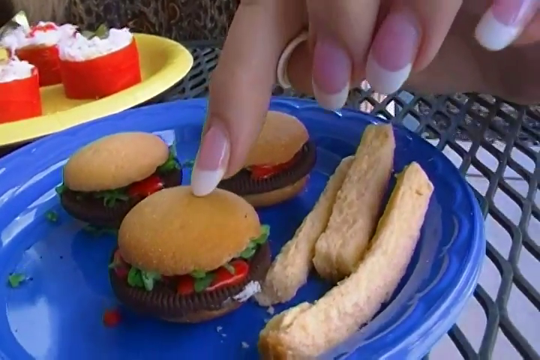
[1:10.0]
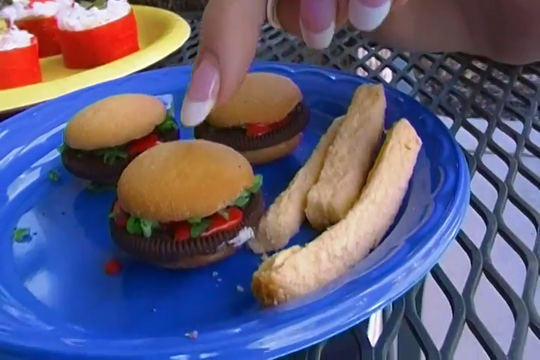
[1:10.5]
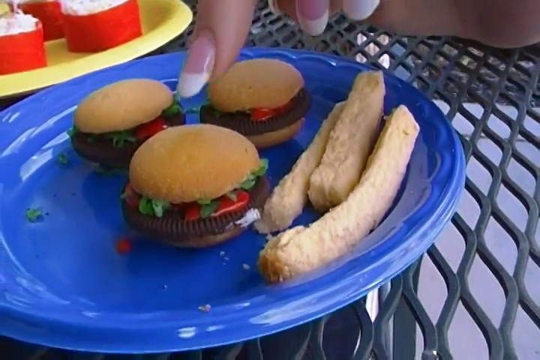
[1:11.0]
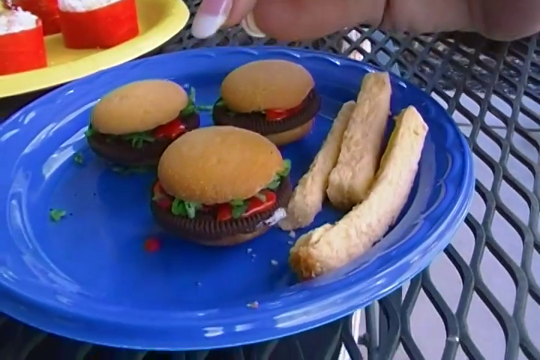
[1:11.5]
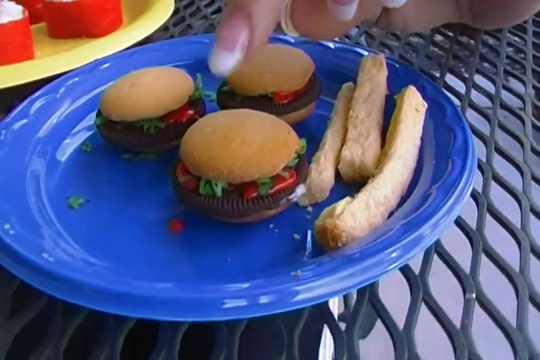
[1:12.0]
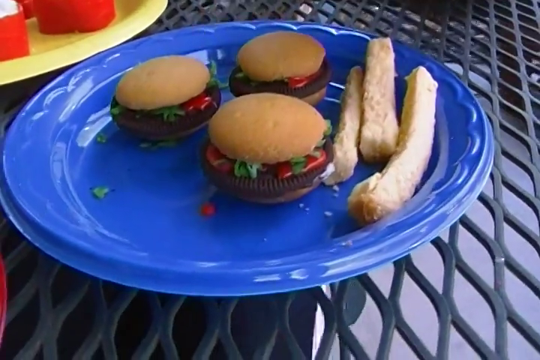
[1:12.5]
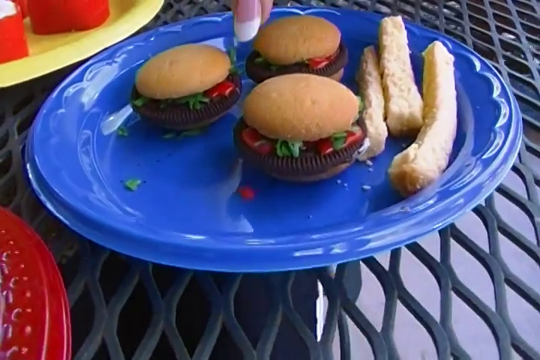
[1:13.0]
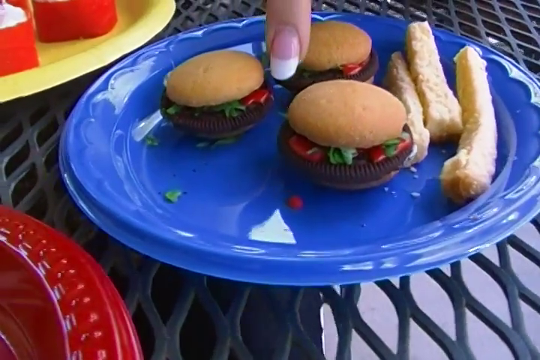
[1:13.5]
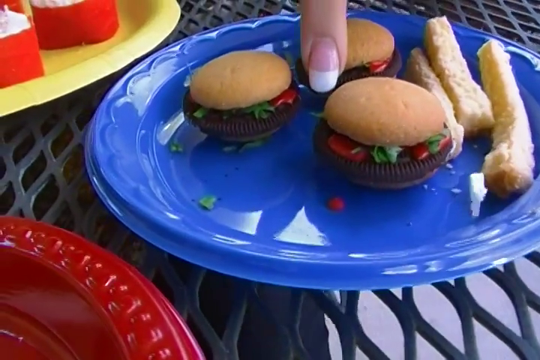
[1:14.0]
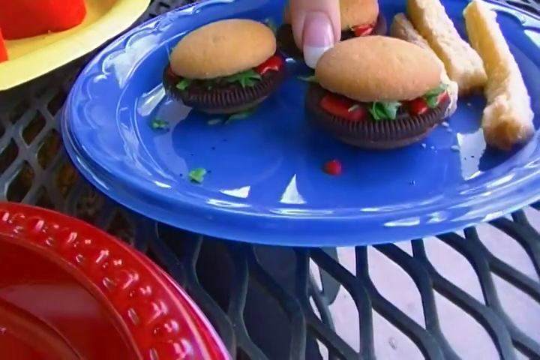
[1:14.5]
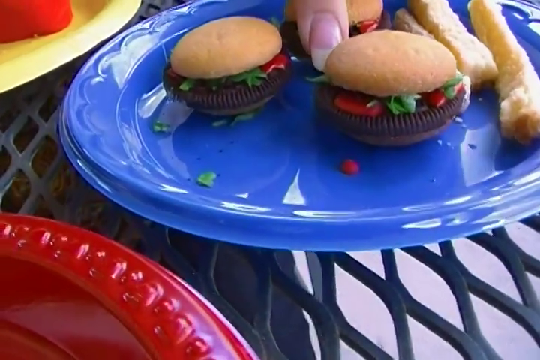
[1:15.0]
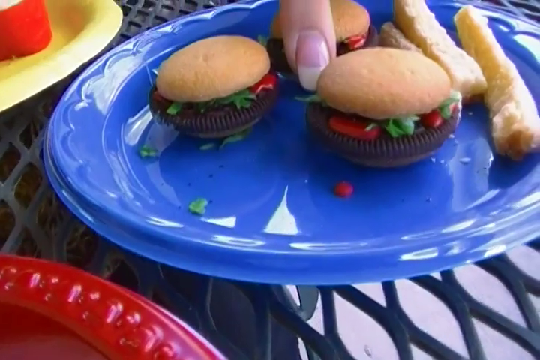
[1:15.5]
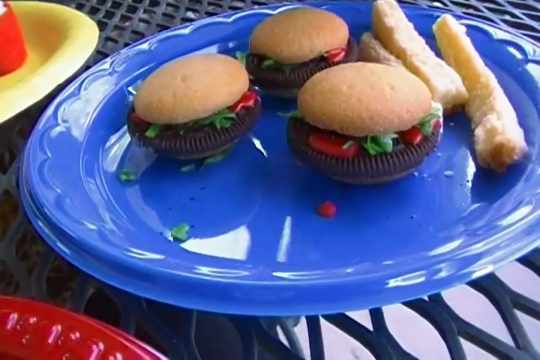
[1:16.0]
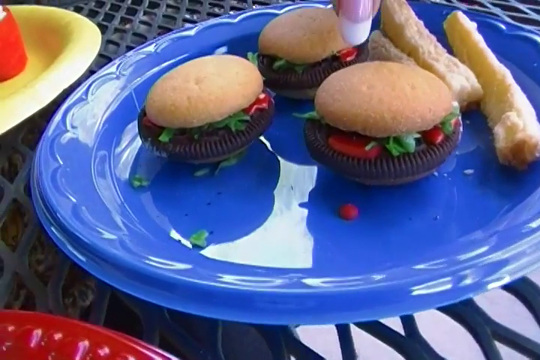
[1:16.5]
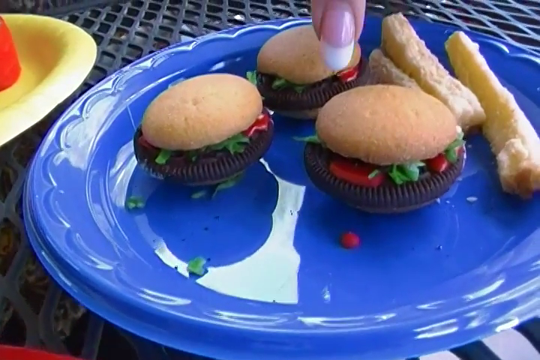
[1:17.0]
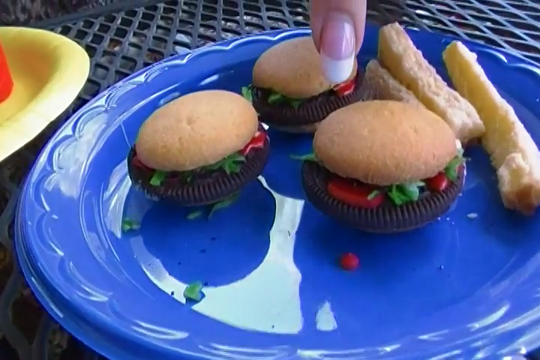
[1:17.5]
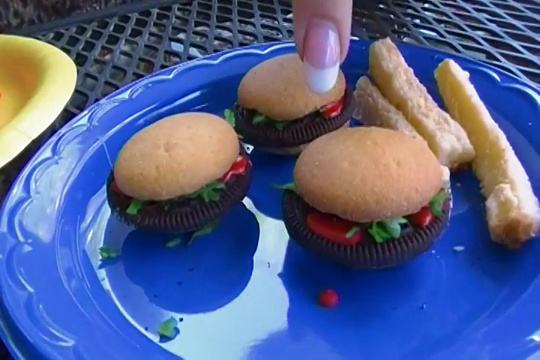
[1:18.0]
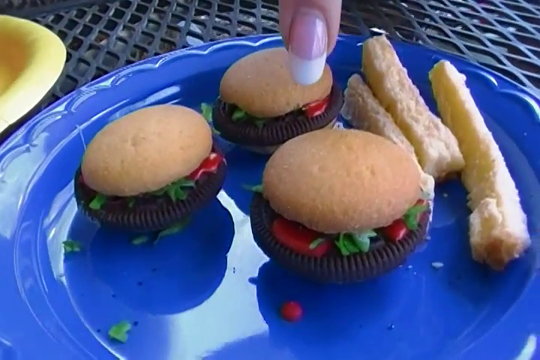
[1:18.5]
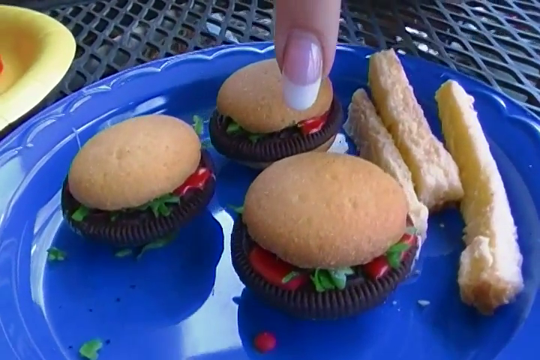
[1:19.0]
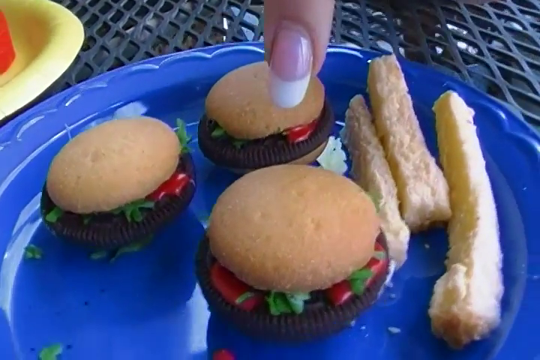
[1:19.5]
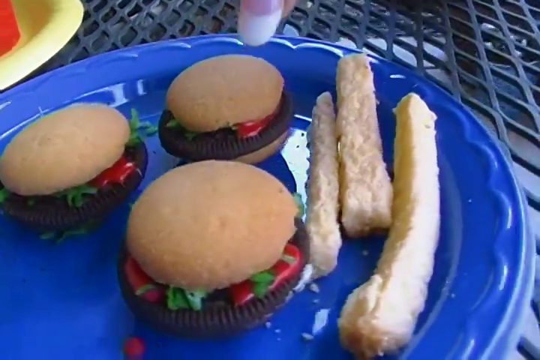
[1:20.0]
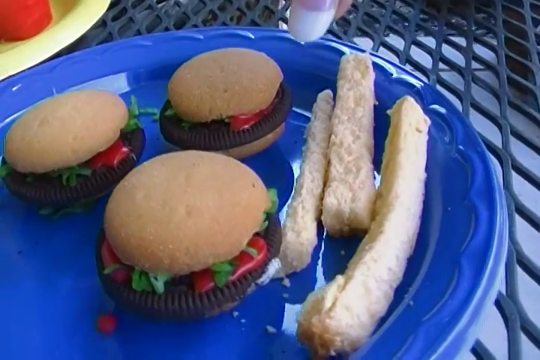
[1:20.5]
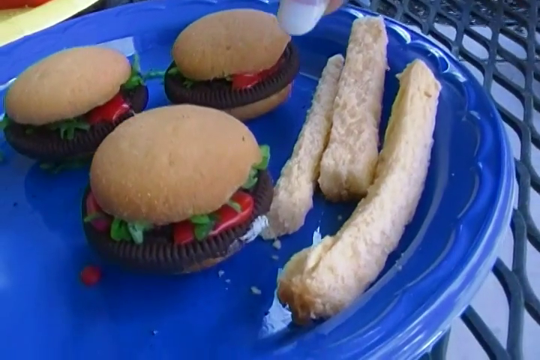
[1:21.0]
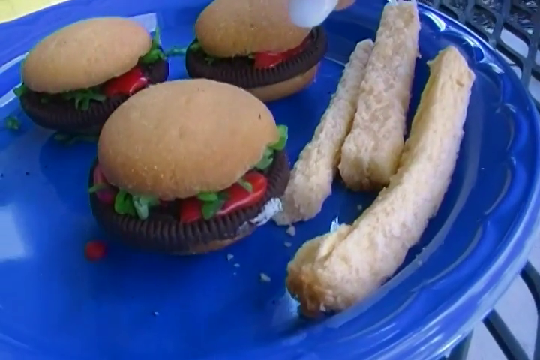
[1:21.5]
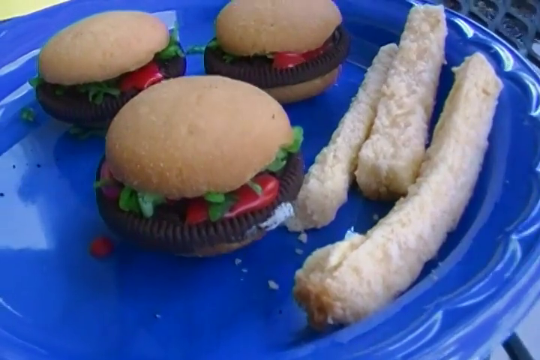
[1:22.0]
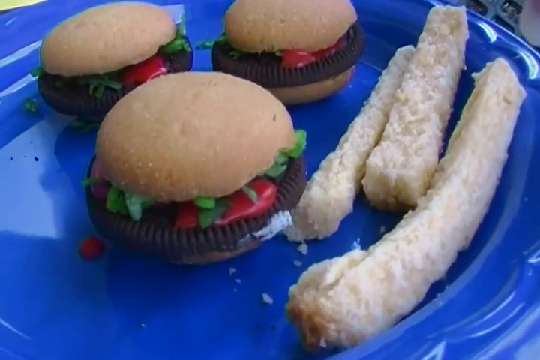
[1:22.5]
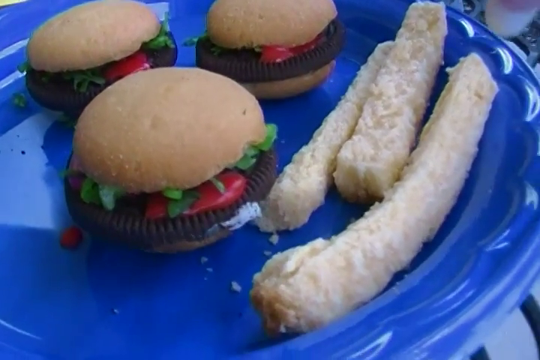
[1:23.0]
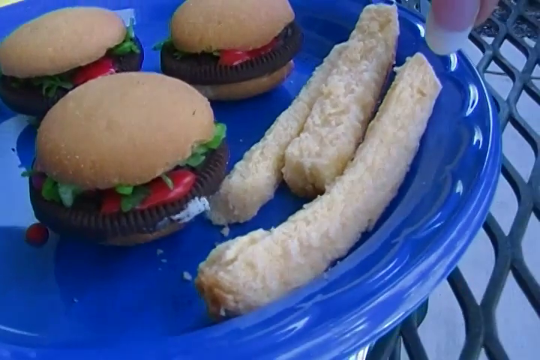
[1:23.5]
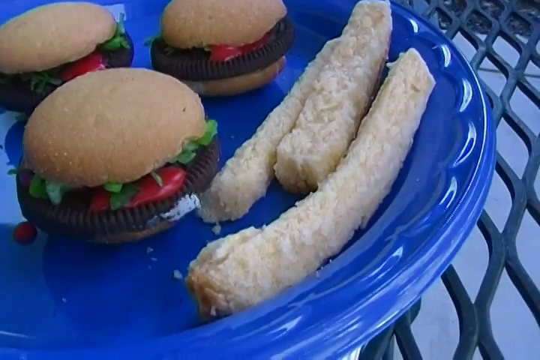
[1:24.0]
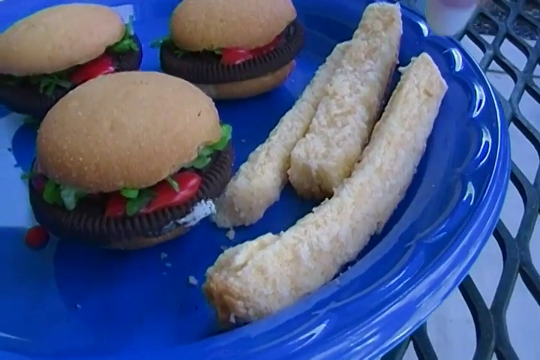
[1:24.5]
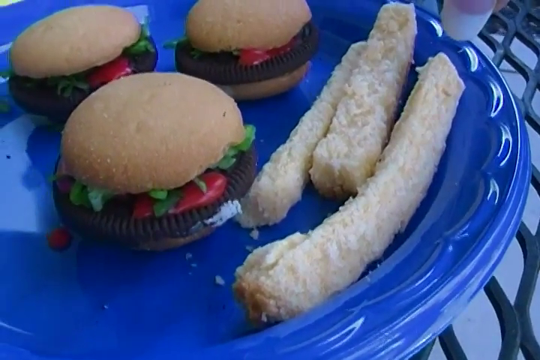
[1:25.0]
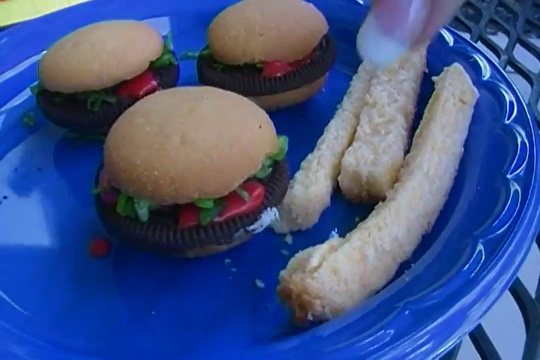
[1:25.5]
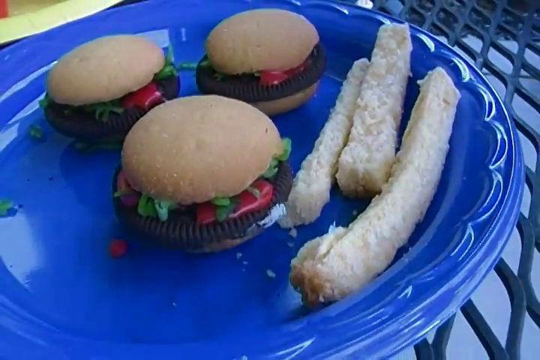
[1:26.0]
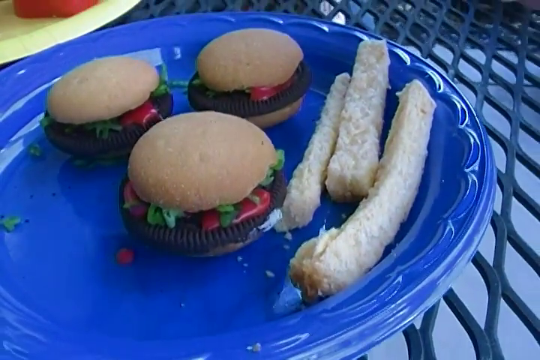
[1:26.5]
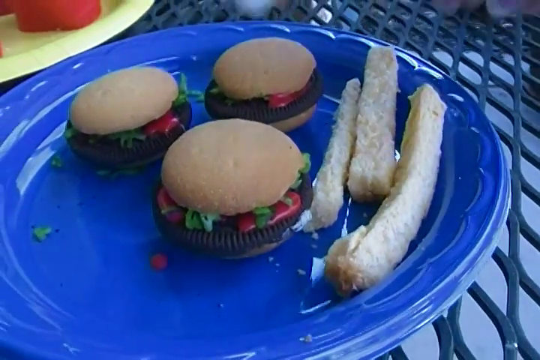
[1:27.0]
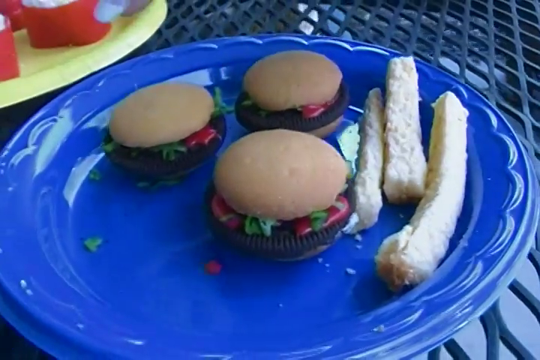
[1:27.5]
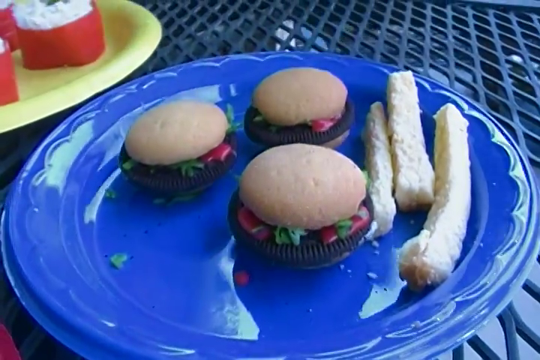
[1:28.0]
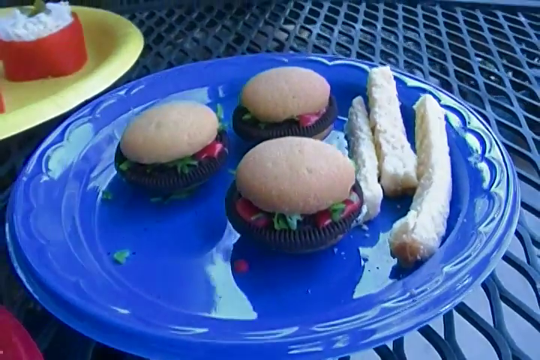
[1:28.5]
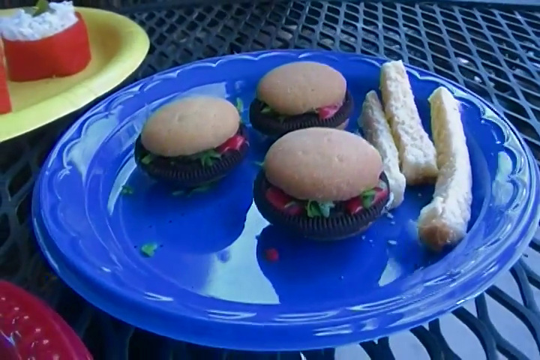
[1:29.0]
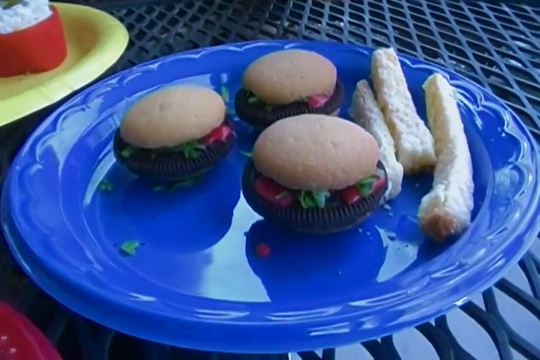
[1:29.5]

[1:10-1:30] The woman is still talking about the mini burgers, which have green stuff on them, and points to the different burgers, starting with the one farther from the camera, then immediately pointing to the fries or chicken next to it. Her nails are clearly visible, white and looking good. The food is shown in close-up; the buns seem not to be regular buns, since they do not deflate or go soft. The food looks a little cold. When she points at the burger closest to the camera, it moves a little, and it looks like some type of odd sandwich.